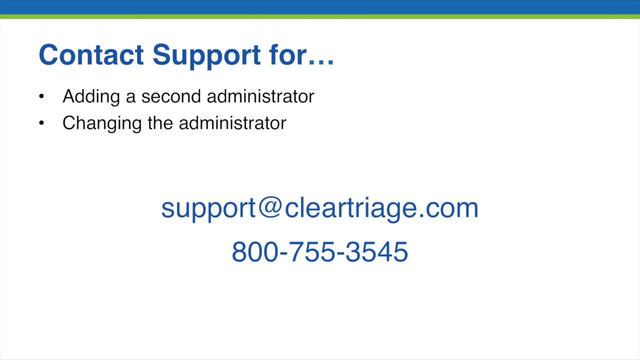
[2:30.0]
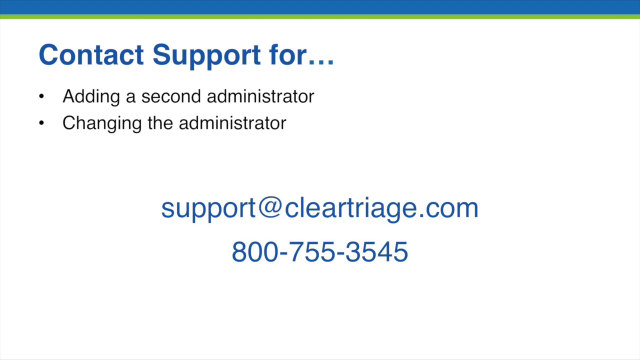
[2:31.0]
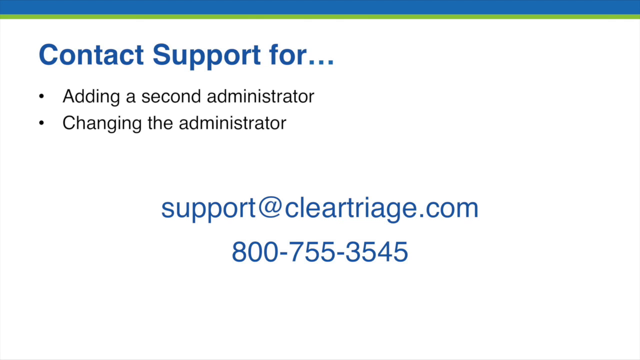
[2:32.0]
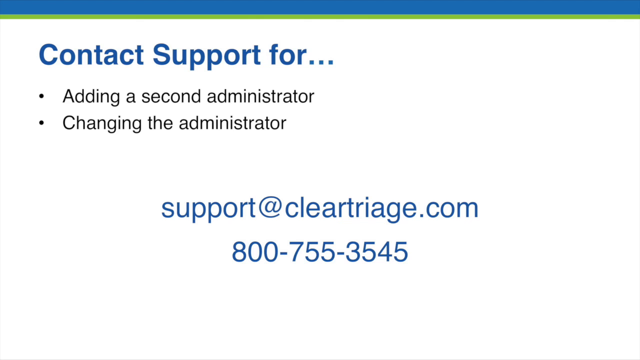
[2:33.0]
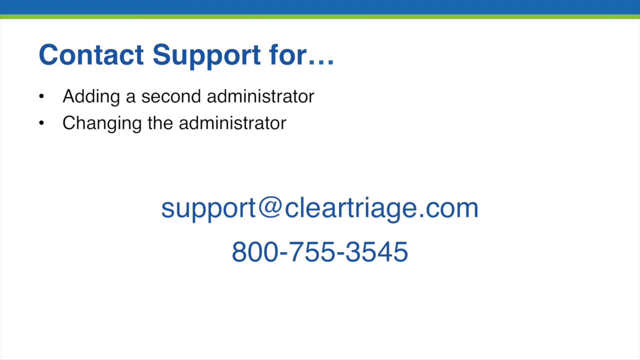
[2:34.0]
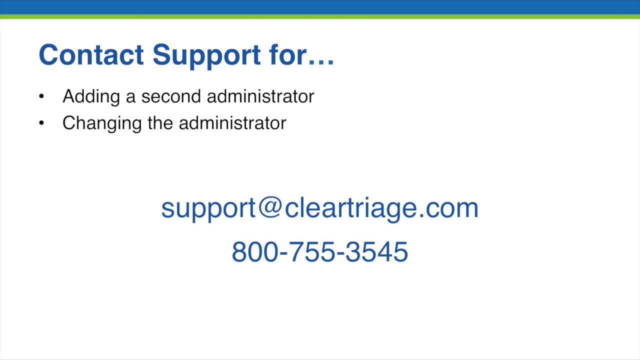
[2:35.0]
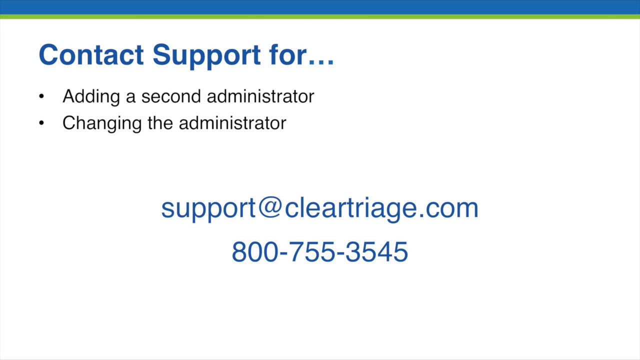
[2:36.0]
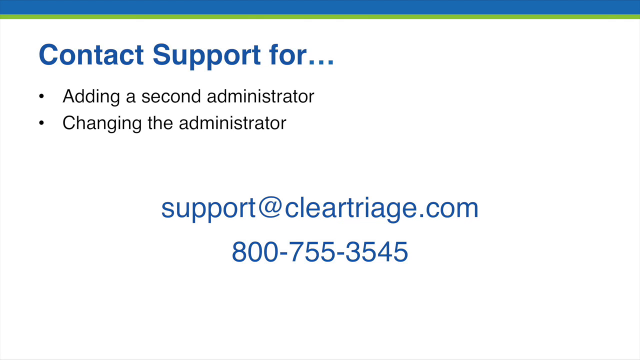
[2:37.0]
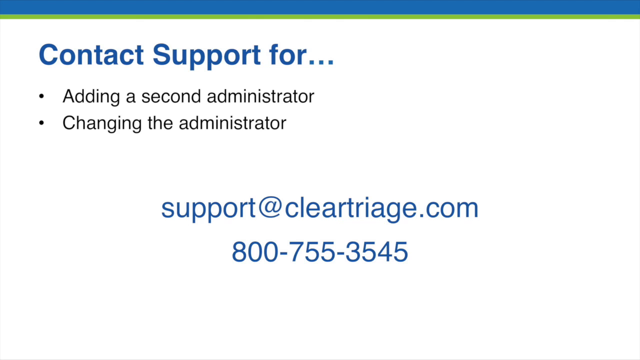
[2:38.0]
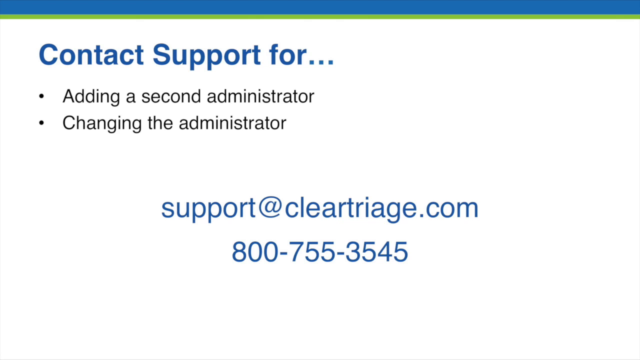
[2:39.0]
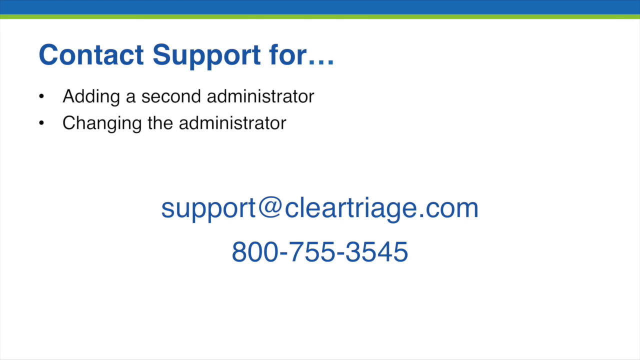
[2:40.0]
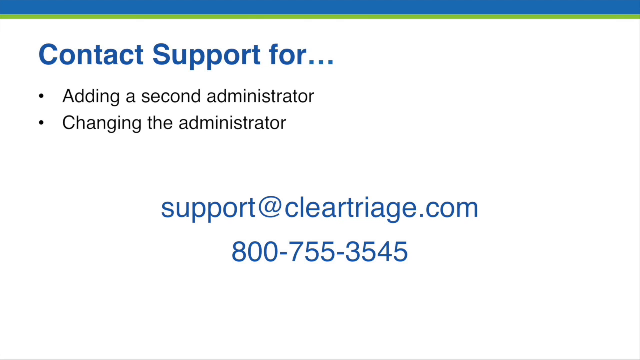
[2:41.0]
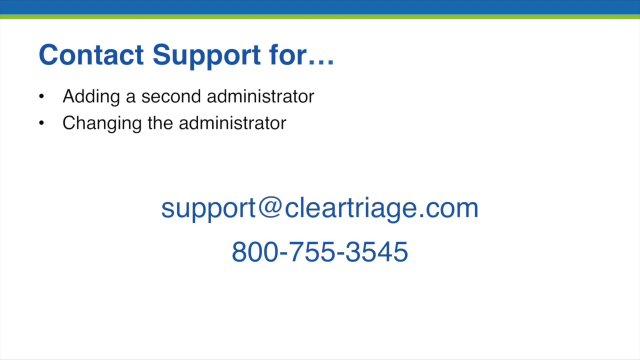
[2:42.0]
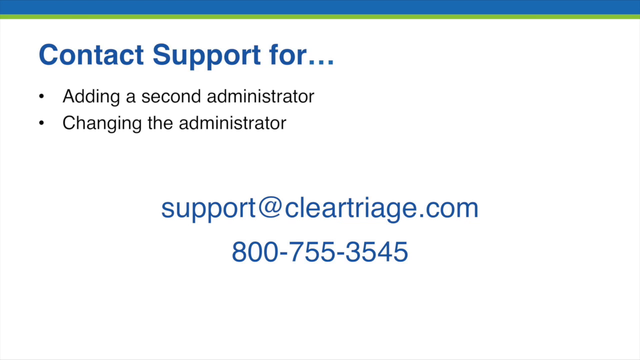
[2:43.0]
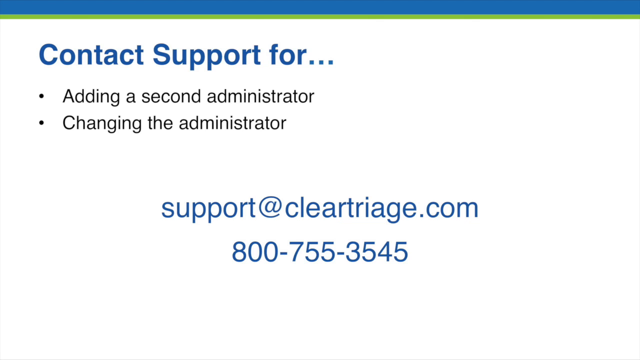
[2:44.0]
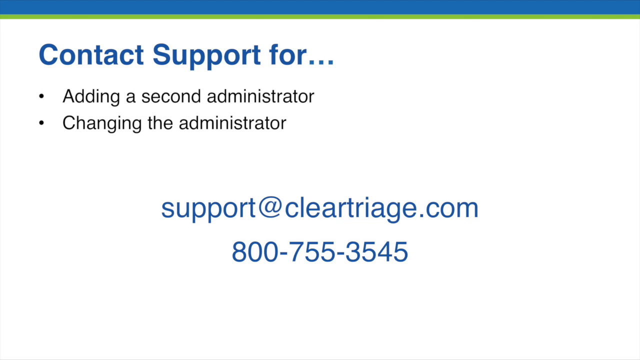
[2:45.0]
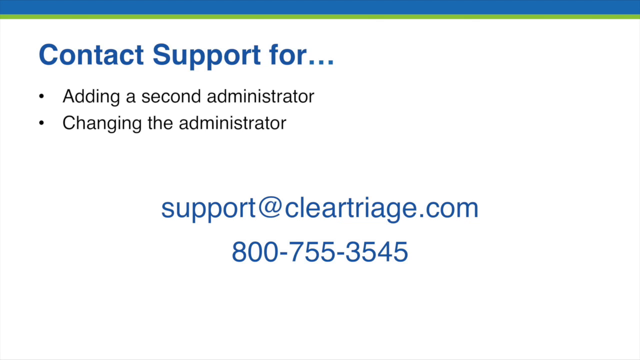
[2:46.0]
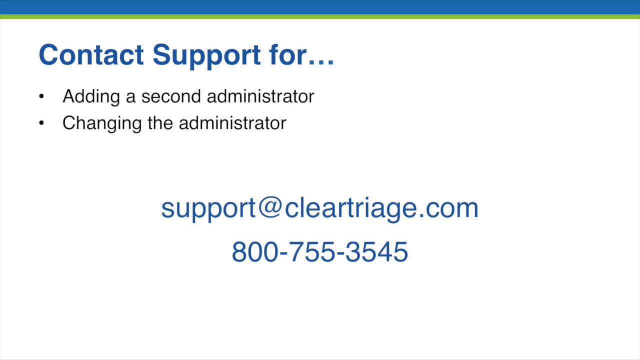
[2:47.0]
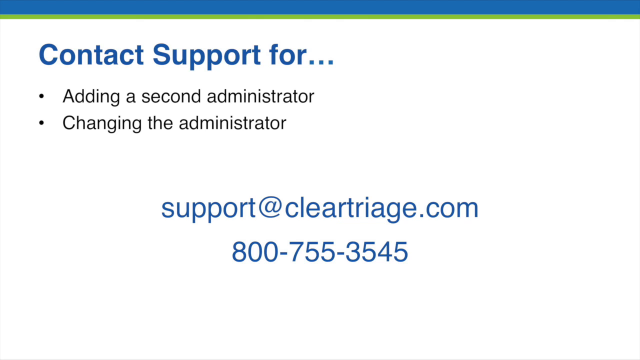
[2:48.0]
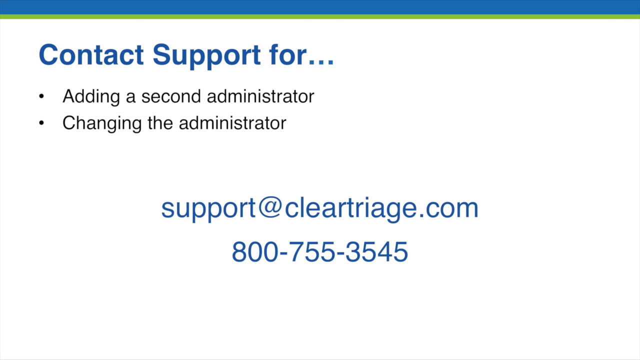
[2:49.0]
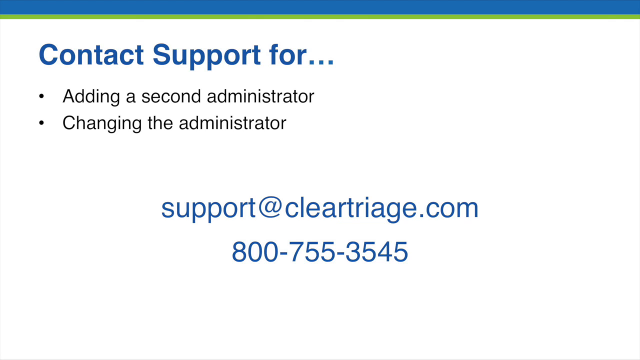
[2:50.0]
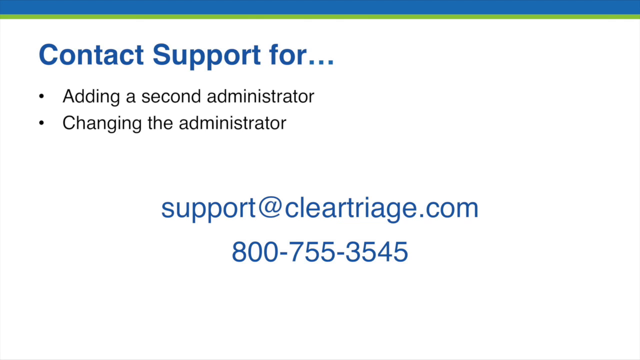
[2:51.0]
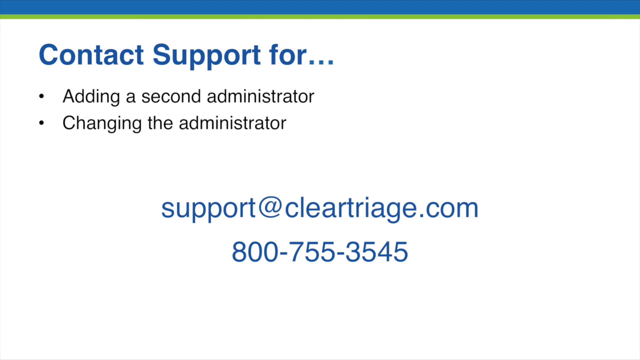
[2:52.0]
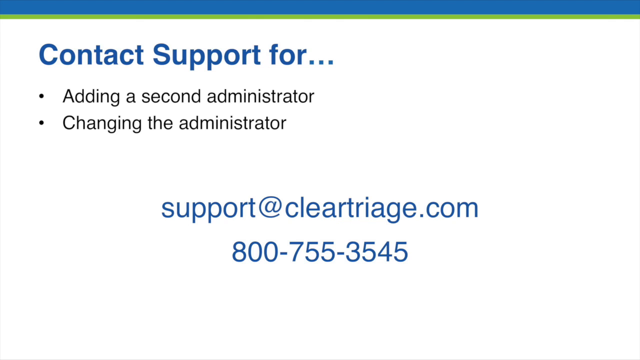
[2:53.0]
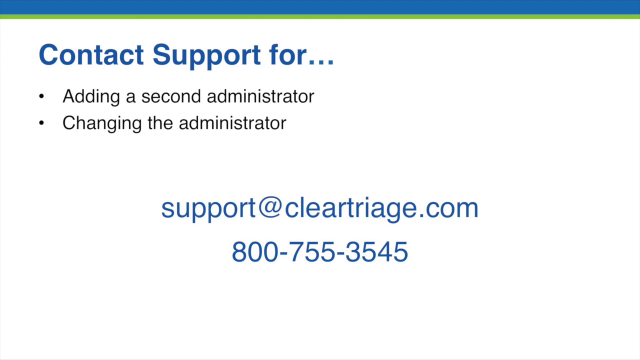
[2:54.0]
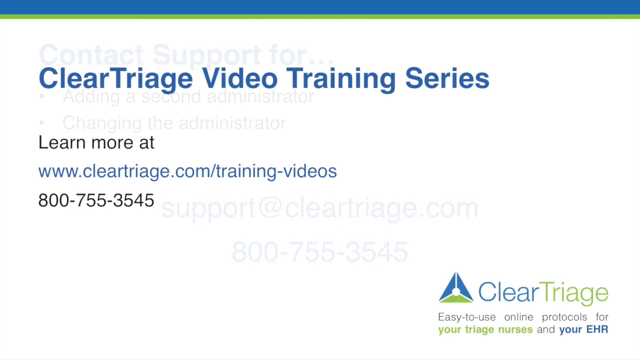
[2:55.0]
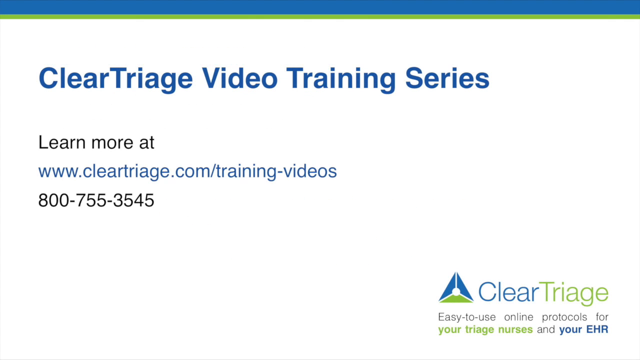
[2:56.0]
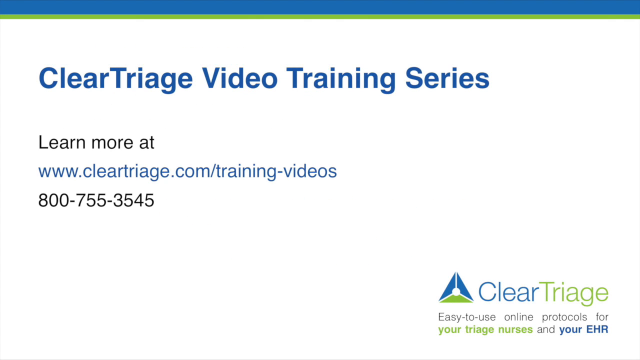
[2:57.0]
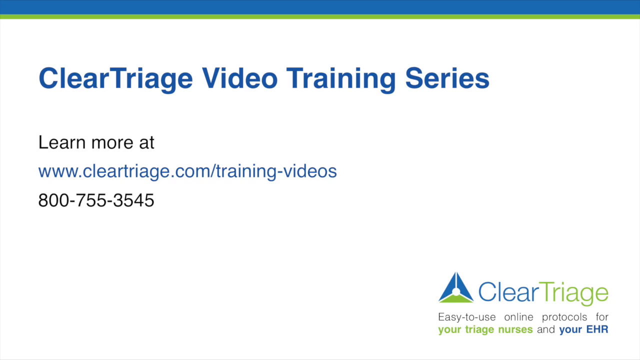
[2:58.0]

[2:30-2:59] The ClearTriage contact support information page remains on screen, with a white background and royal blue and sage green parallel solid bands at the top of the page. In blue letters it reads "contact support for adding a second administrator and changing the administrator", followed by the contact details support@cleartriage.com and telephone number 800-755-3545. The video stays on this page for some seconds. The screen then changes to another information page with the same blue and green heading and the title "clear triage video training series". It reads "Learn more at www.cleartriage.com/training-videos" along with the same telephone number 800-755-3545. The ClearTriage logo in blue and green is in the bottom right corner, and underneath is text ending "is easy to use online protocols for your triage nurses and your EHR". The video stays on this page for a few seconds.